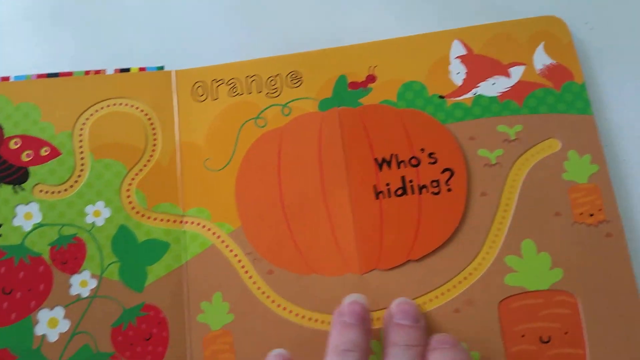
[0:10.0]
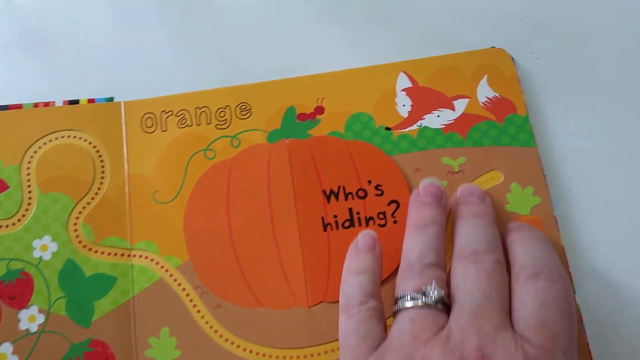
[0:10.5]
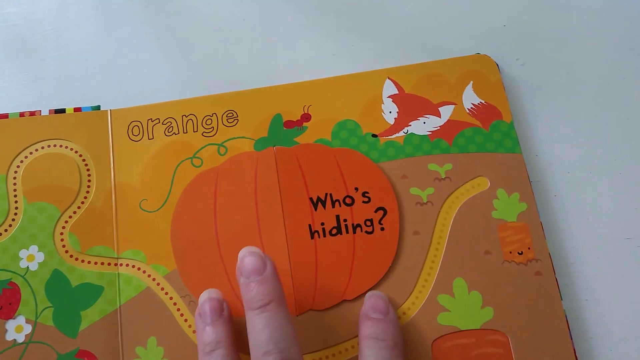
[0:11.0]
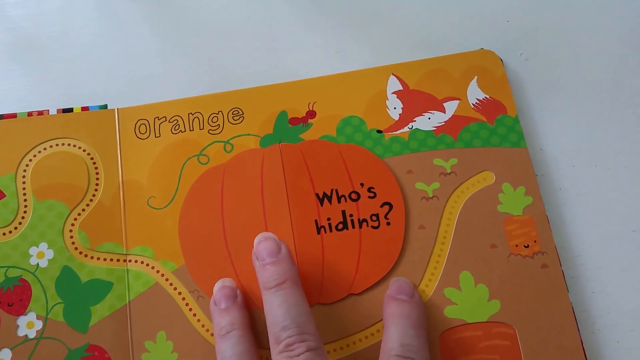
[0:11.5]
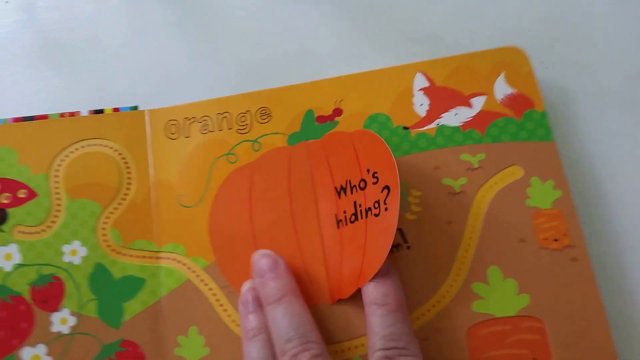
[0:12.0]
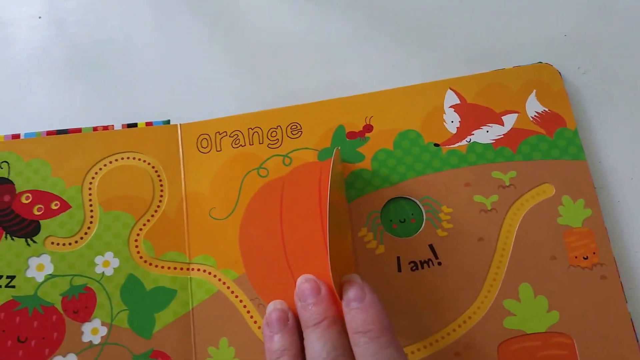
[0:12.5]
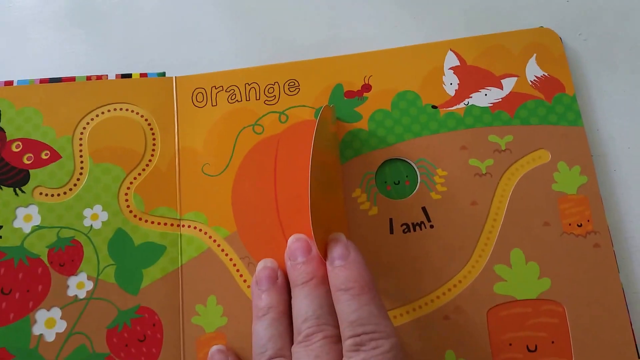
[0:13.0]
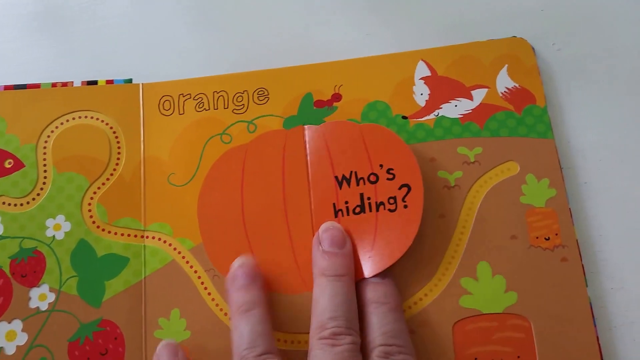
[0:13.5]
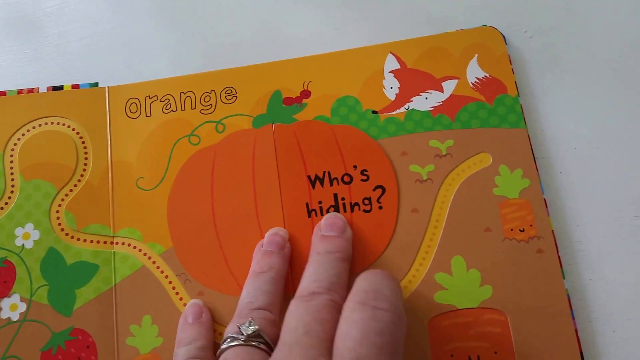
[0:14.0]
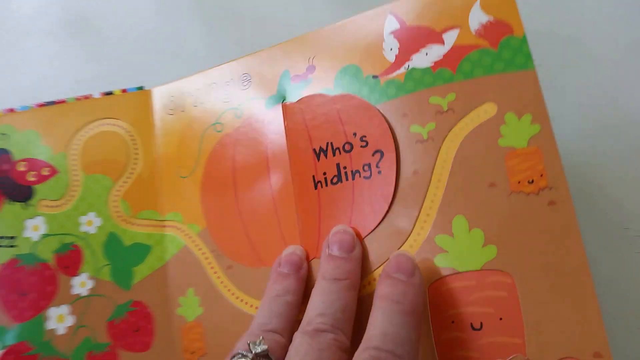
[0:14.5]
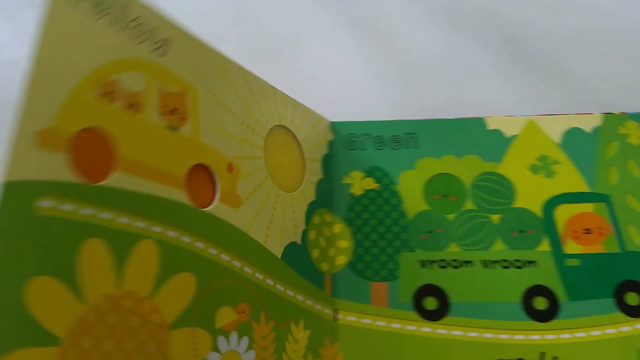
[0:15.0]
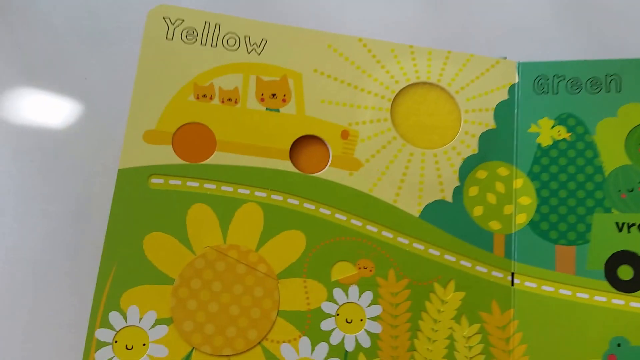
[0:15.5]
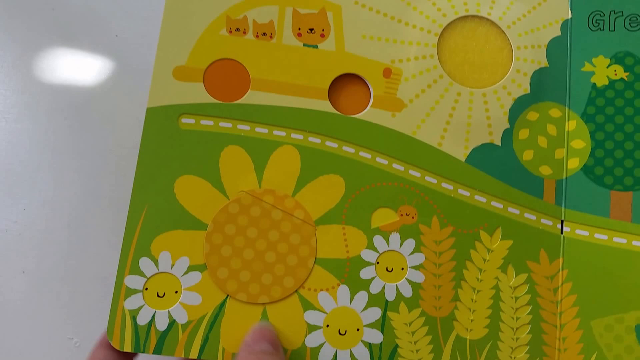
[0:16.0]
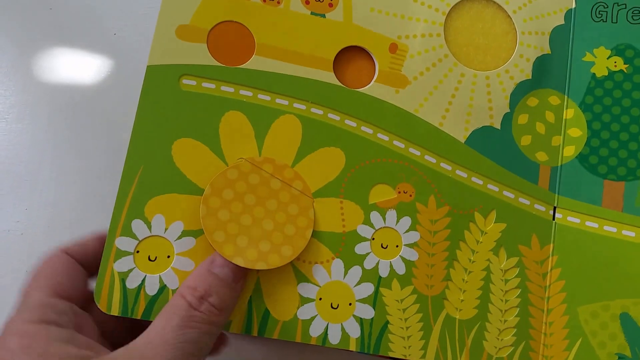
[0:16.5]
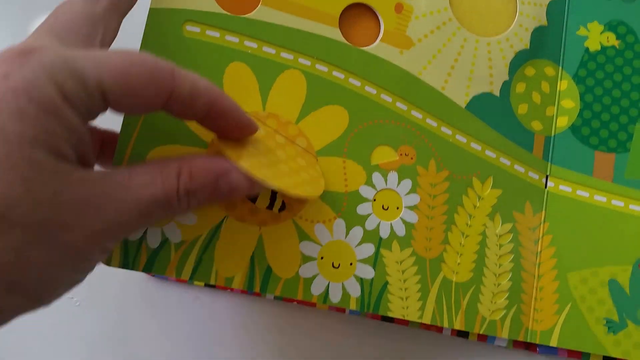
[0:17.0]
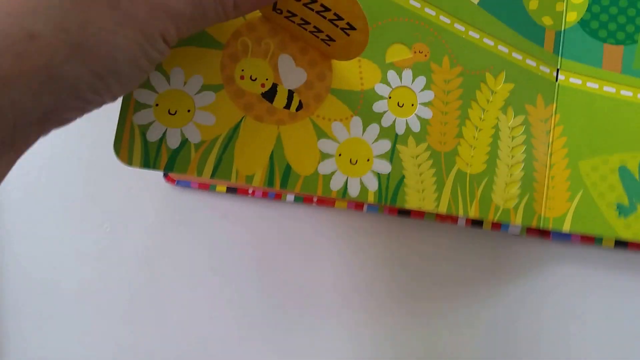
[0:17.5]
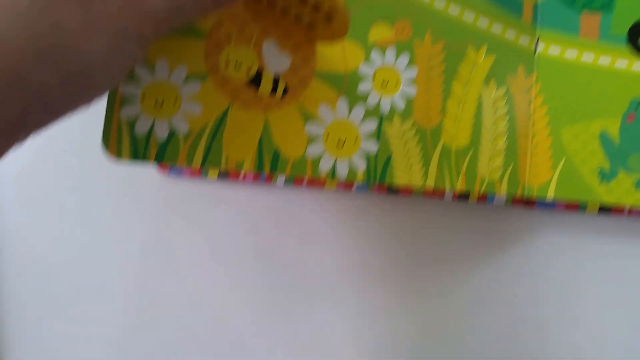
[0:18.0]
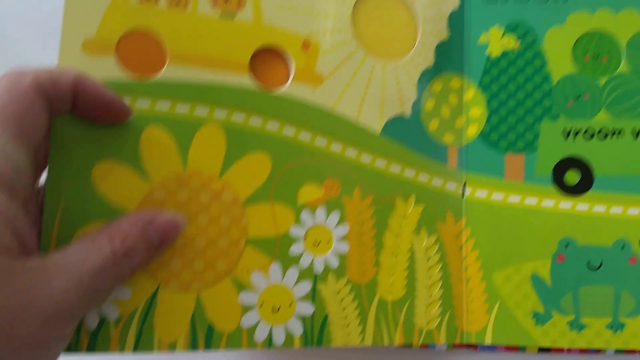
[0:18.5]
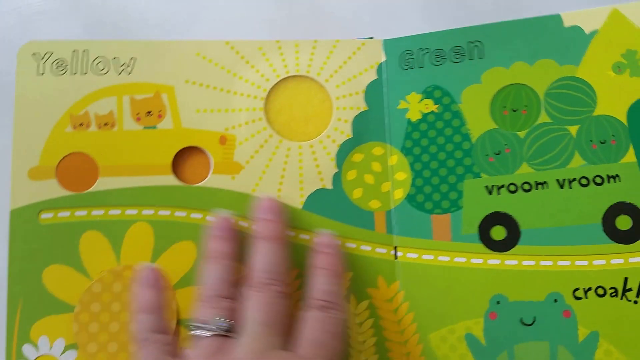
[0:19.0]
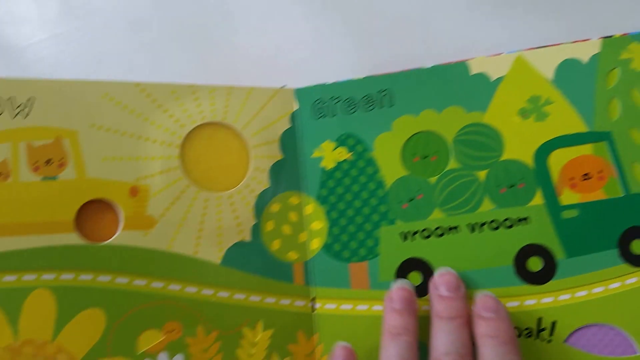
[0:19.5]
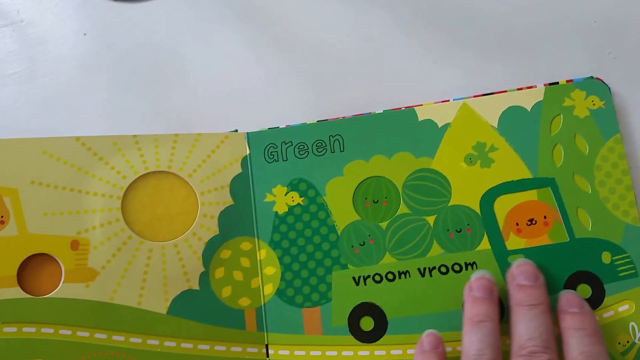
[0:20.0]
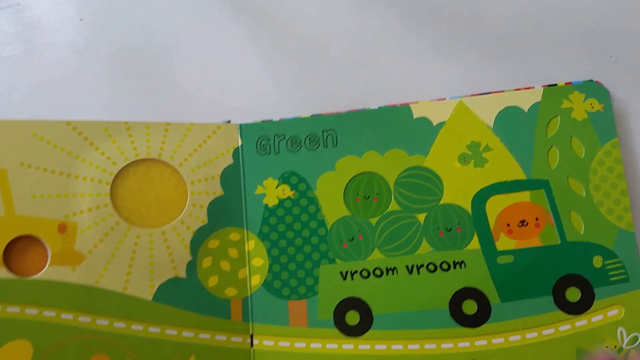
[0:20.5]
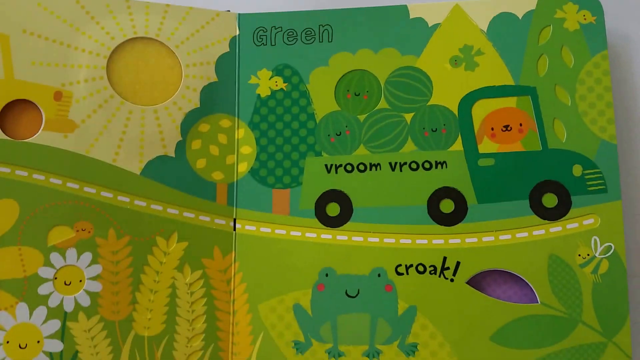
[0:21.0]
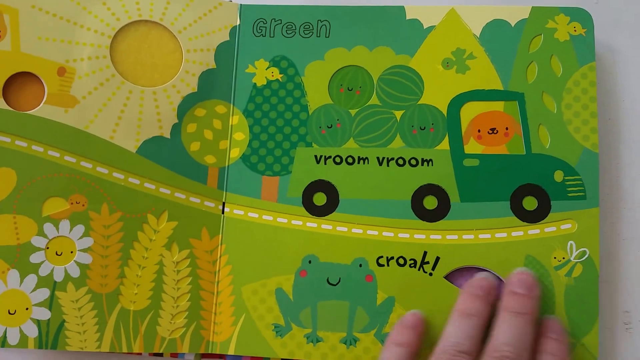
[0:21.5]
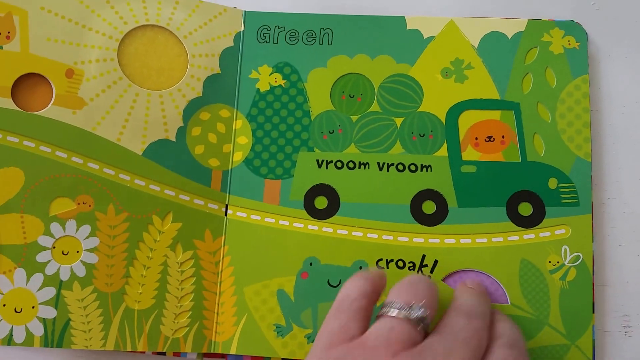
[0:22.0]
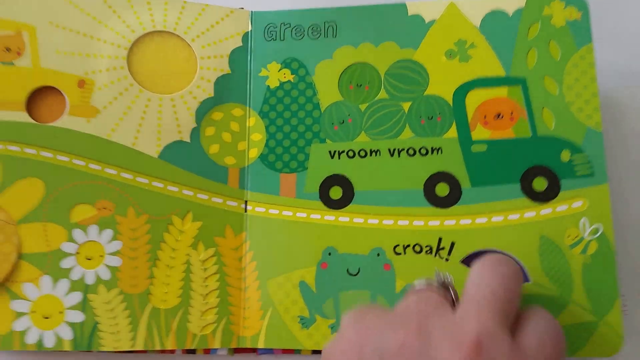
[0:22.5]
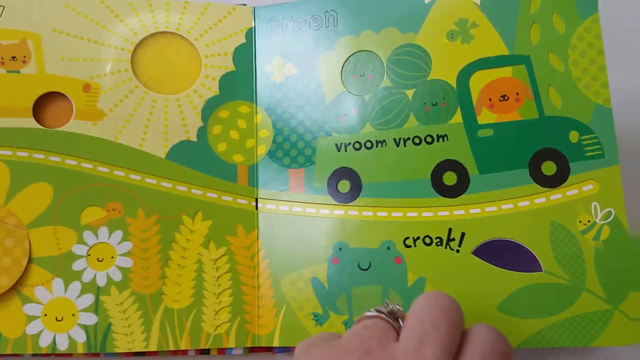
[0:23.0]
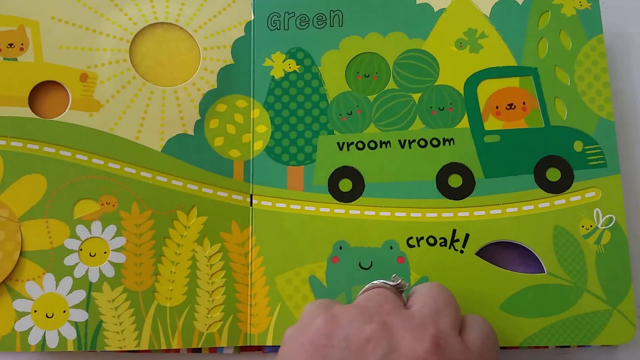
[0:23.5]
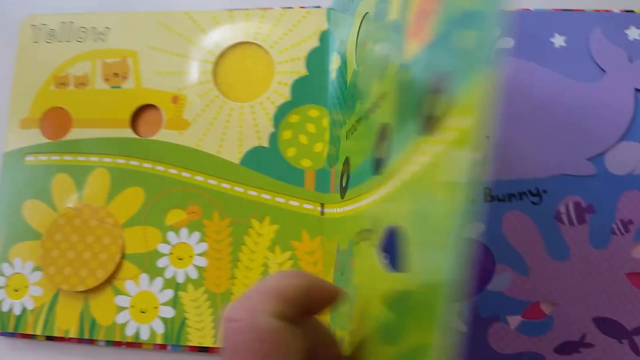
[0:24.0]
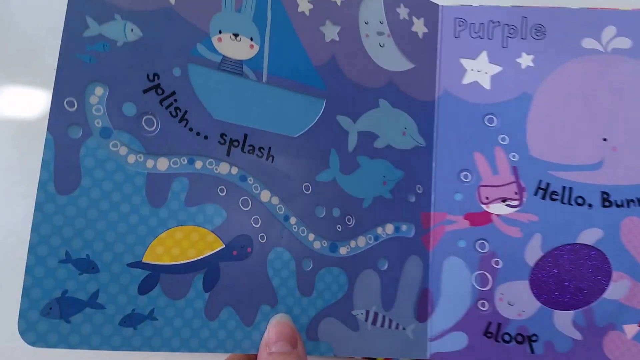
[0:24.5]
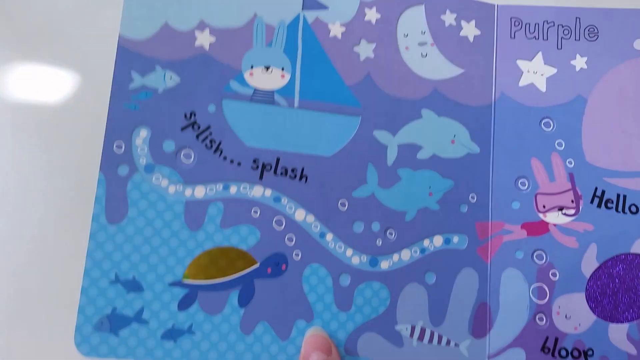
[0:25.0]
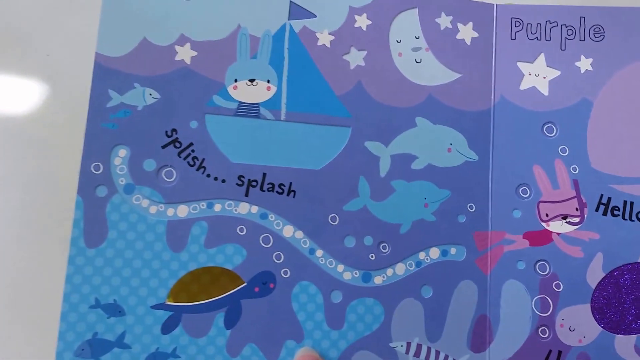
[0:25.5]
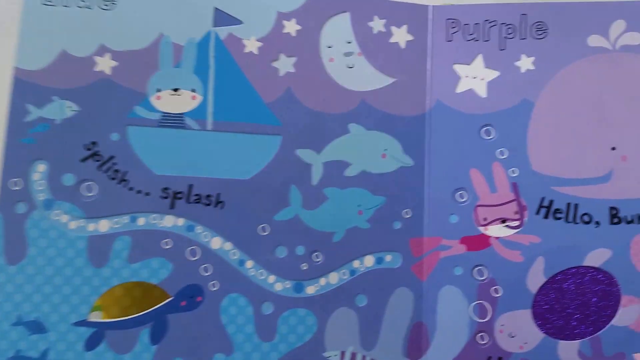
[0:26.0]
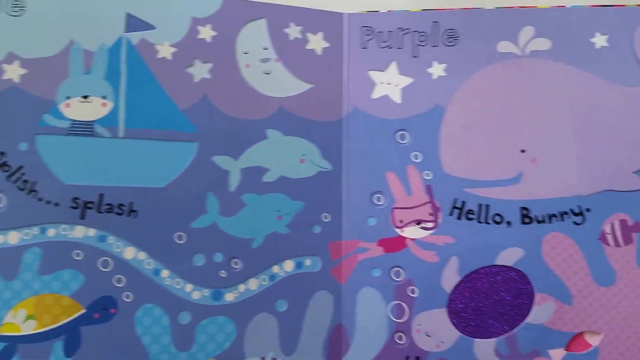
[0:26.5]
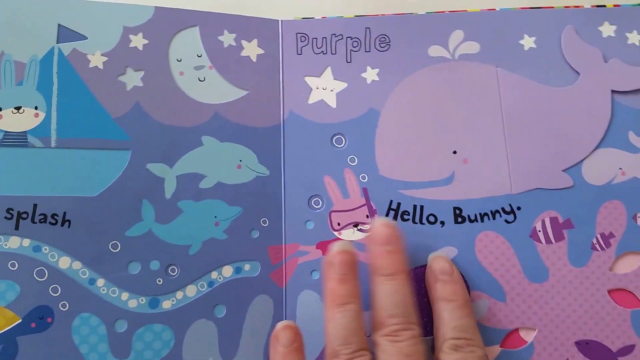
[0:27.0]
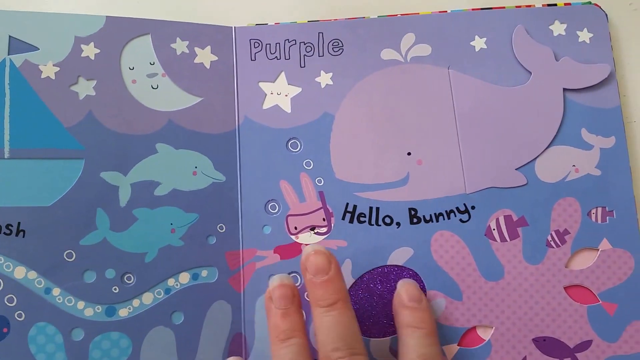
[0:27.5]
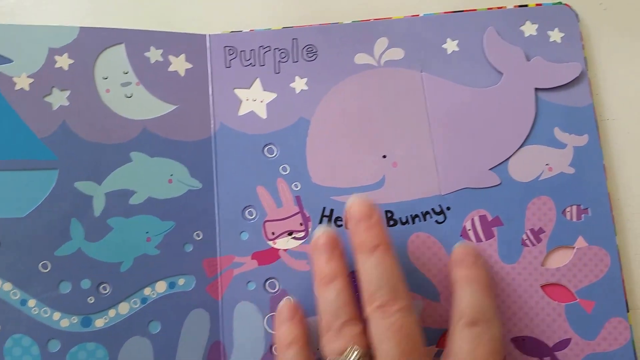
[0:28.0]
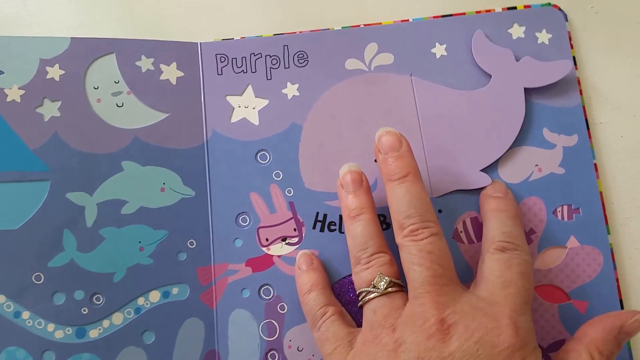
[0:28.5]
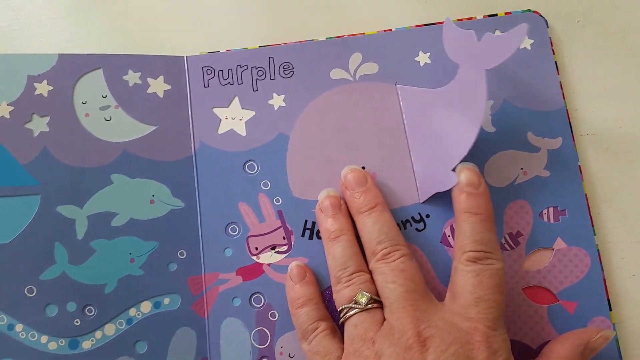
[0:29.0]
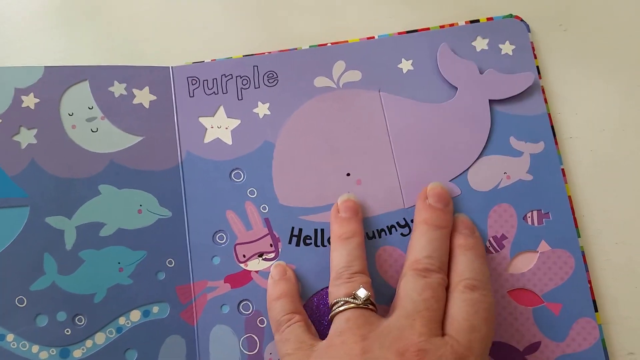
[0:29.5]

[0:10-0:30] The person interacts with the pumpkin page, flipping over the "Who's Hiding" text on the pumpkin. Right under it is revealed the text "I am" in black and what looks like a green bug with a happy face. They turn to the next page, a yellow page, and lift up a sunflower on the bottom left, revealing what looks like a bee underneath. On the right, a green page shows a truck driving by with "Vroom Vroom" on it, and at the bottom there is a green frog with the word "Croak". The person then turns to the blue page, which has a bunny with a blue sail, and the right page is purple with a giant purple whale.